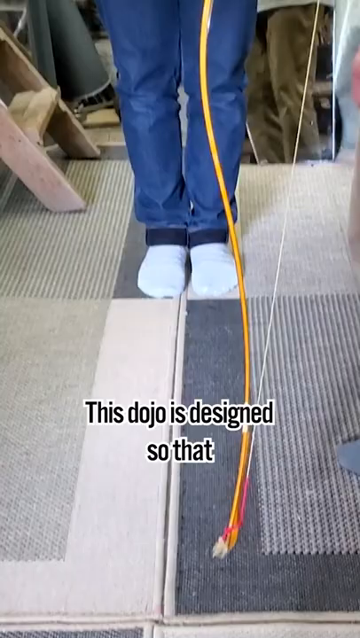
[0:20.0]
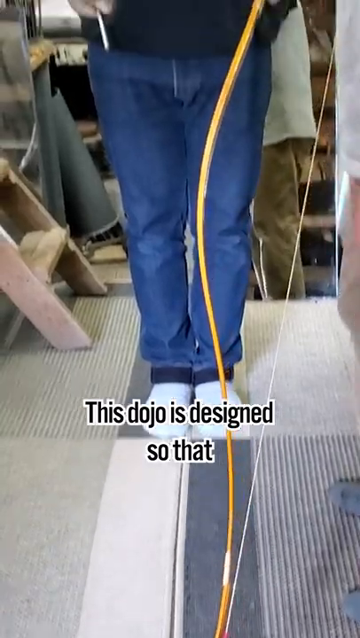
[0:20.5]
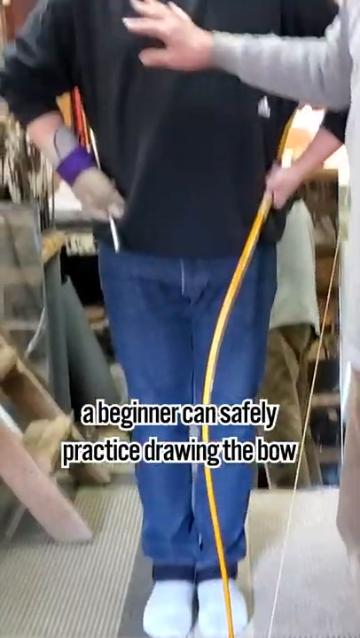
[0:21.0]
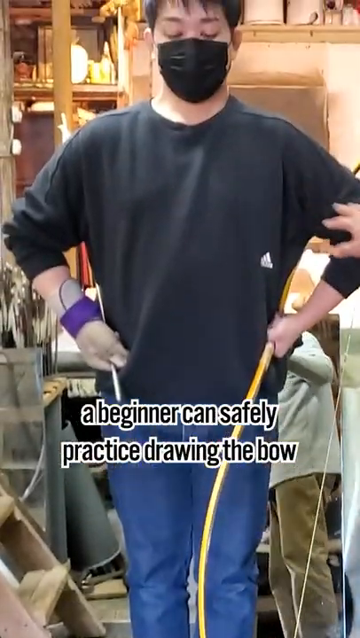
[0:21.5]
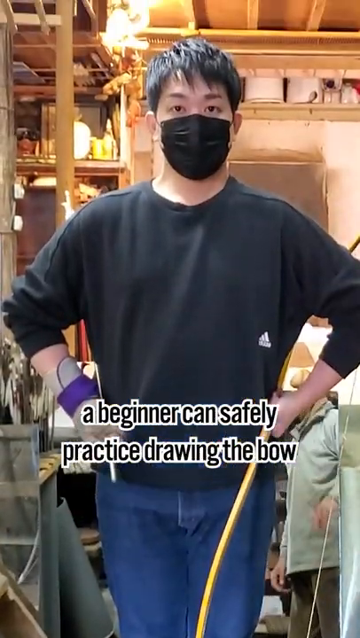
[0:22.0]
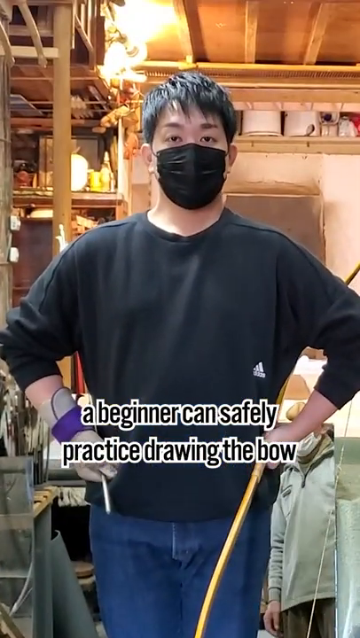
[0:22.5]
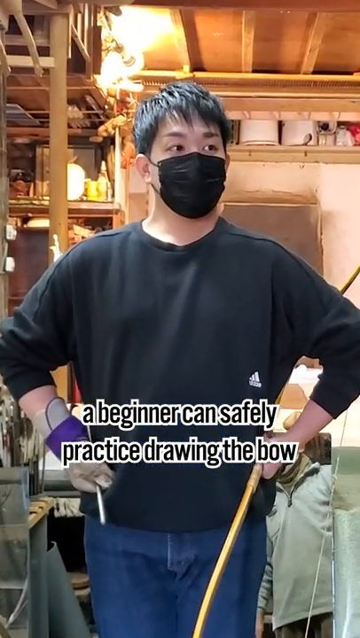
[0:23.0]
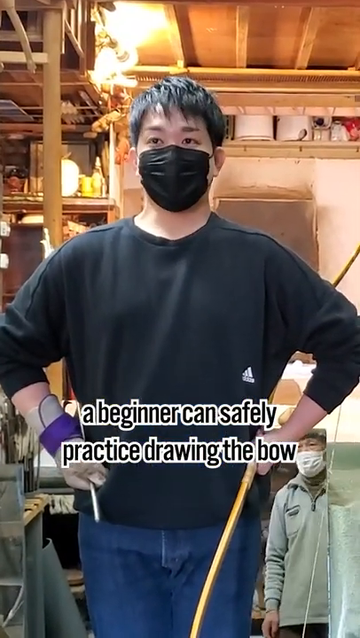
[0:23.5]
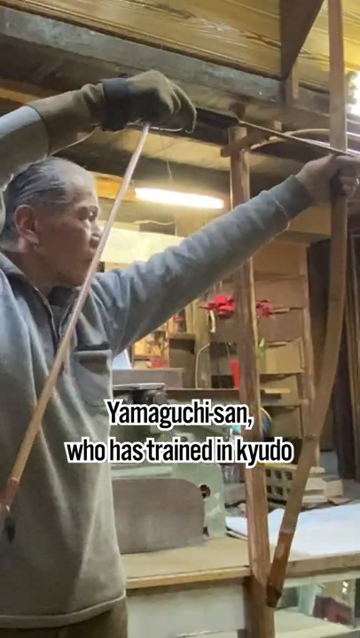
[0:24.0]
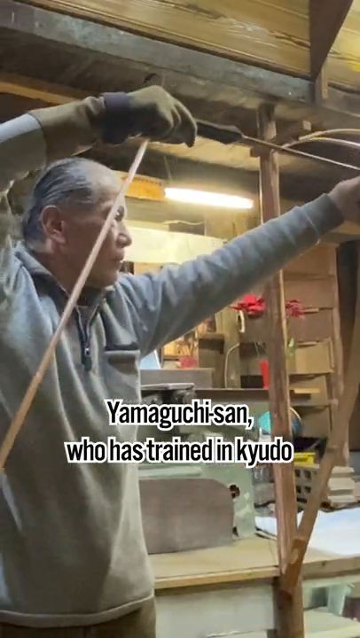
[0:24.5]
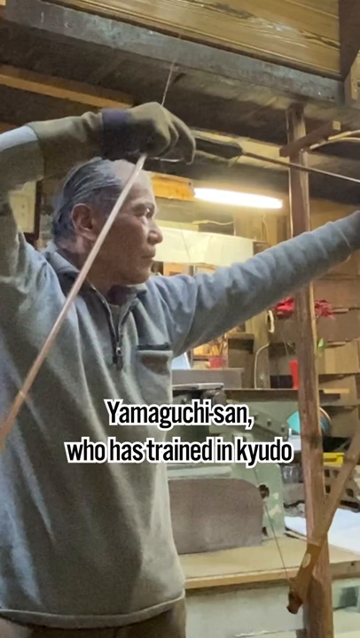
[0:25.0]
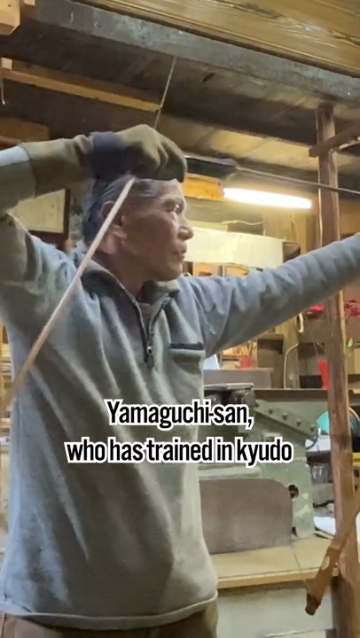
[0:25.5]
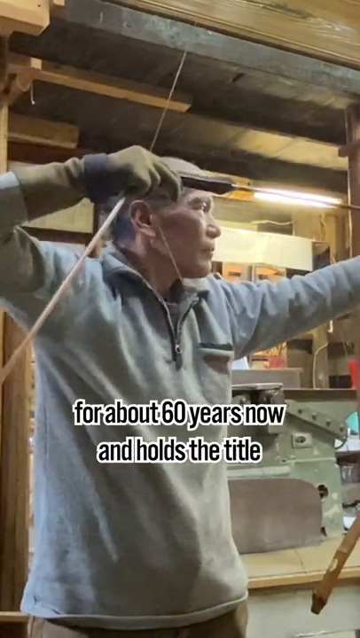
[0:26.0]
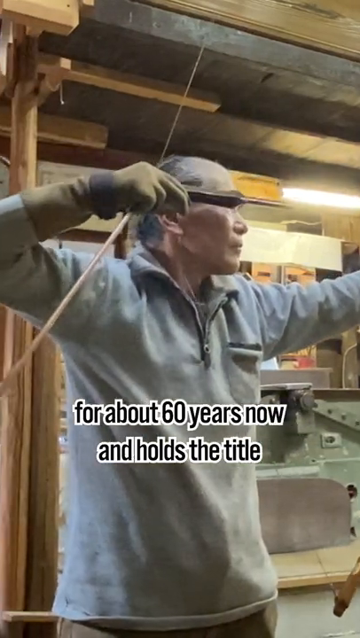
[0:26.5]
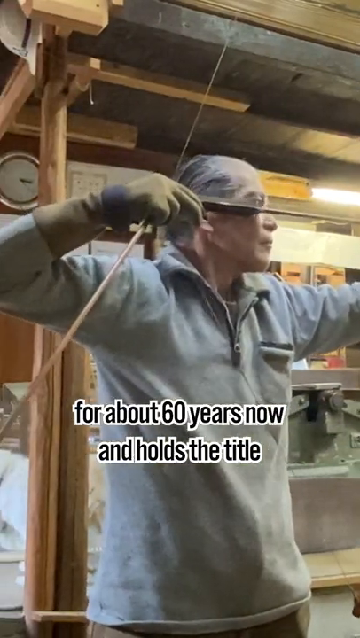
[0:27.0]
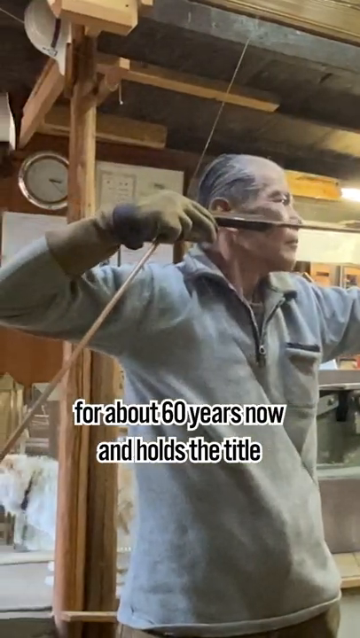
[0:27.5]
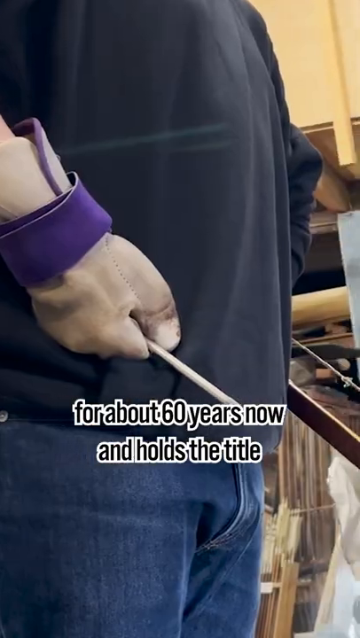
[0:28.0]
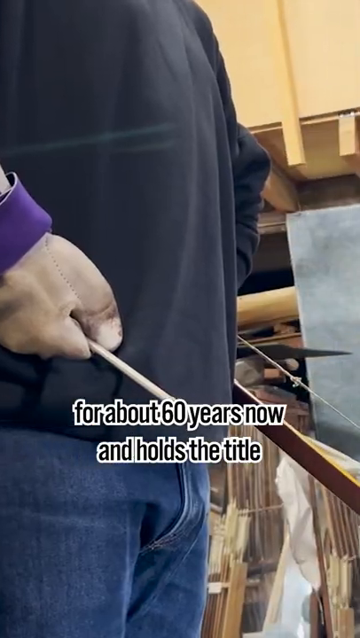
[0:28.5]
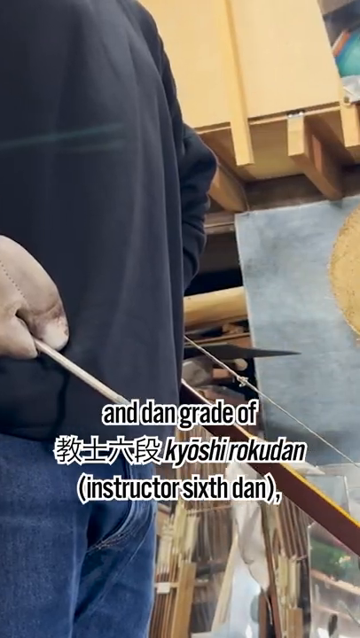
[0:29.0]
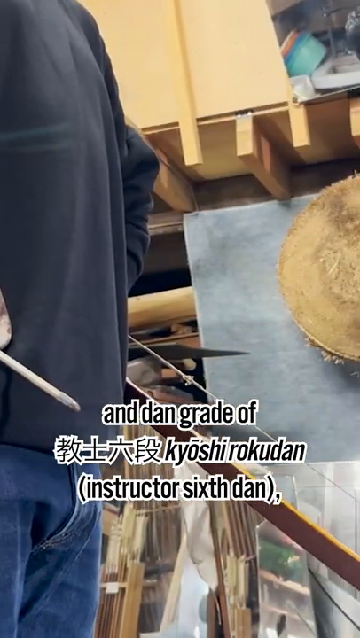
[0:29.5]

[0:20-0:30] The video continues with Japanese archery. Text reads "this dojo is designed so that a beginner can safely practice drawing the bow." Further text names a person who has trained for about 60 years and holds the title, and gives the instructor's Dan grade as Kiyoshi Rokudan, the instructor's sixth Dan. A person stands with their feet together, and a long bow is visible. A person has a mask on, and a person, apparently the expert, draws the arrow back, getting ready to shoot at the target.